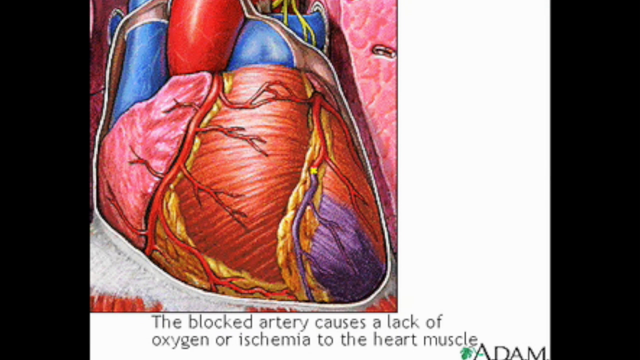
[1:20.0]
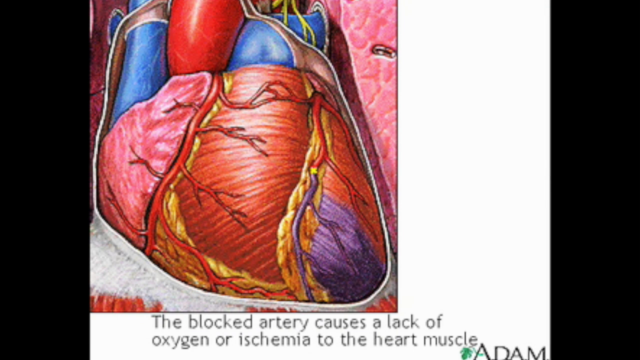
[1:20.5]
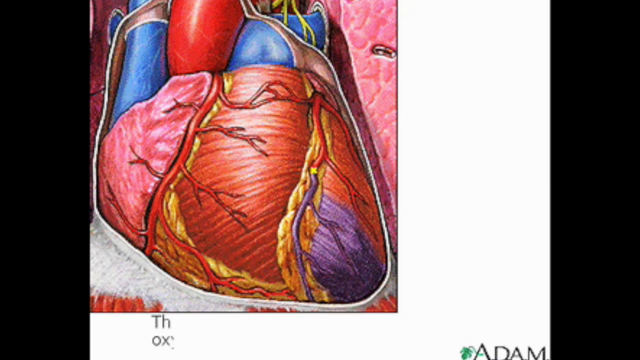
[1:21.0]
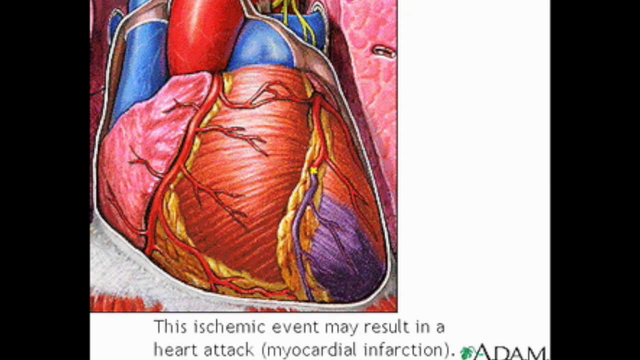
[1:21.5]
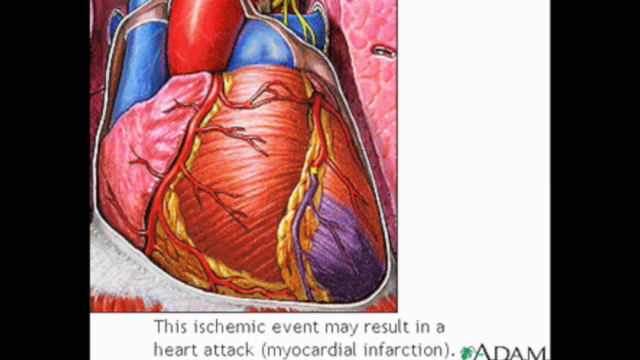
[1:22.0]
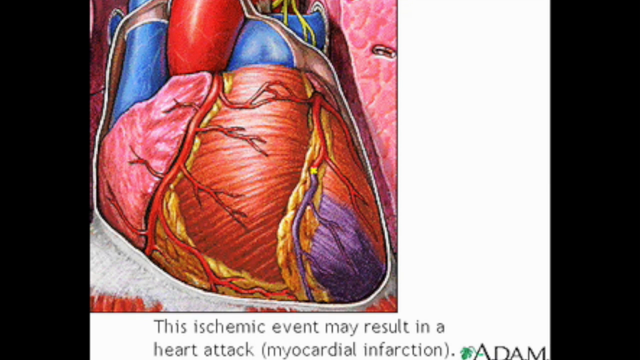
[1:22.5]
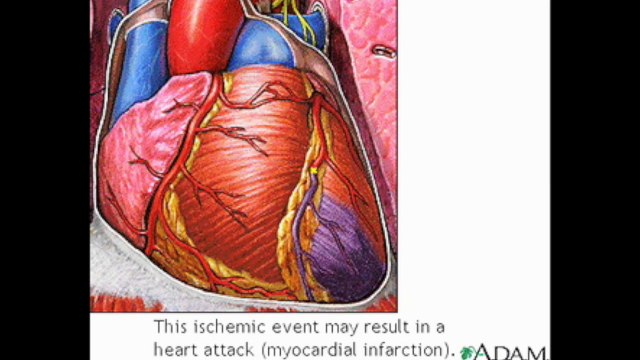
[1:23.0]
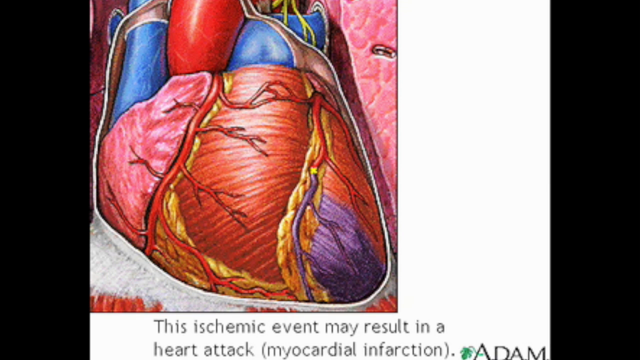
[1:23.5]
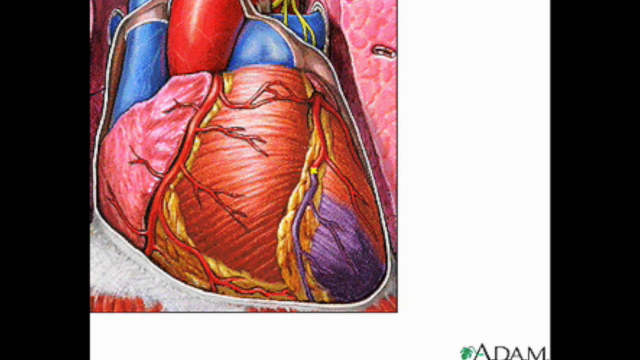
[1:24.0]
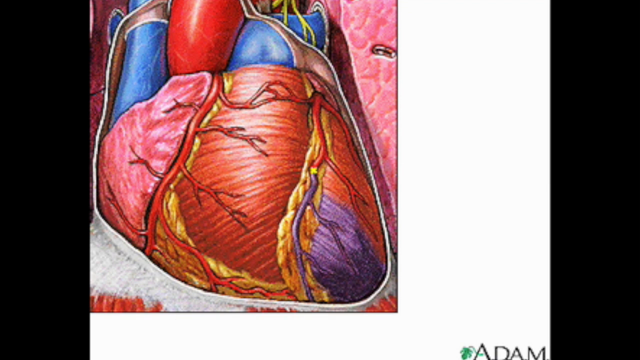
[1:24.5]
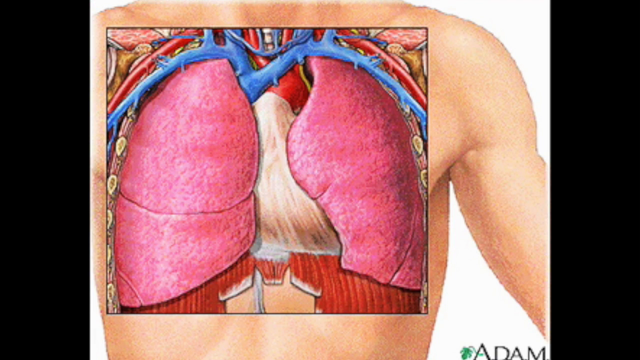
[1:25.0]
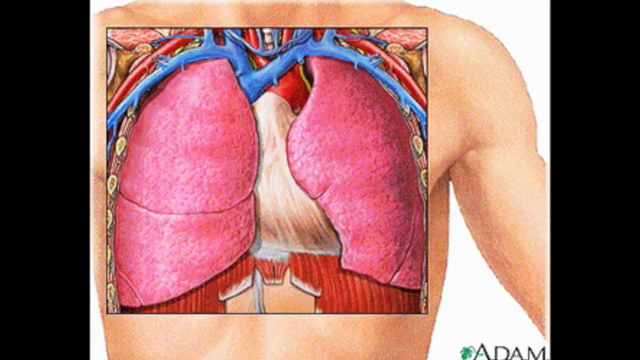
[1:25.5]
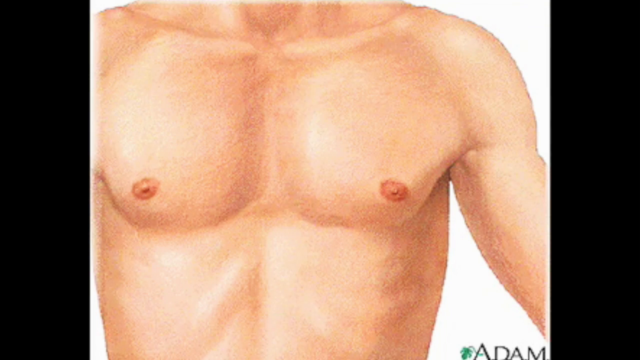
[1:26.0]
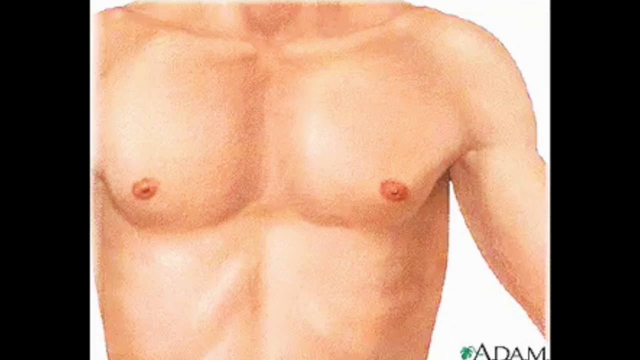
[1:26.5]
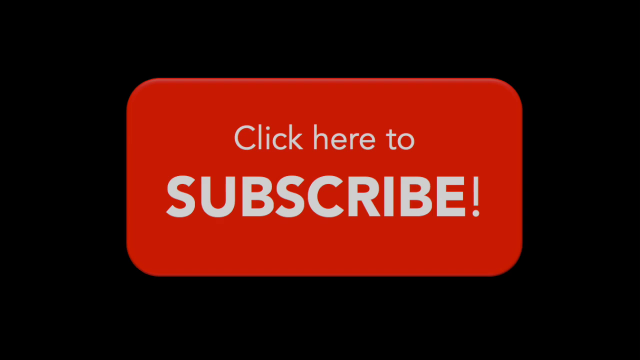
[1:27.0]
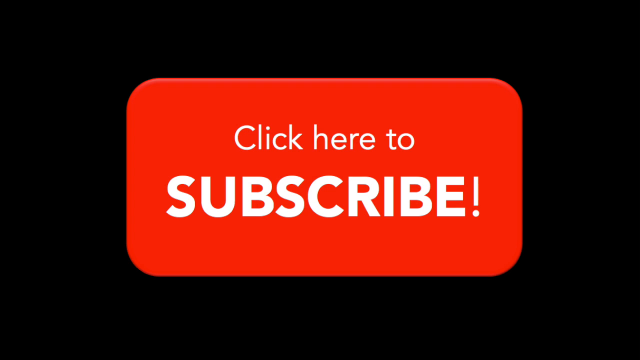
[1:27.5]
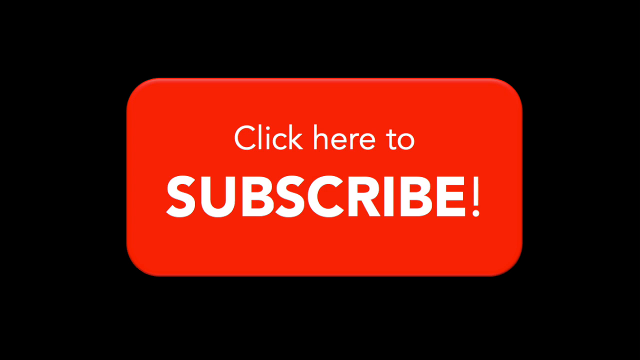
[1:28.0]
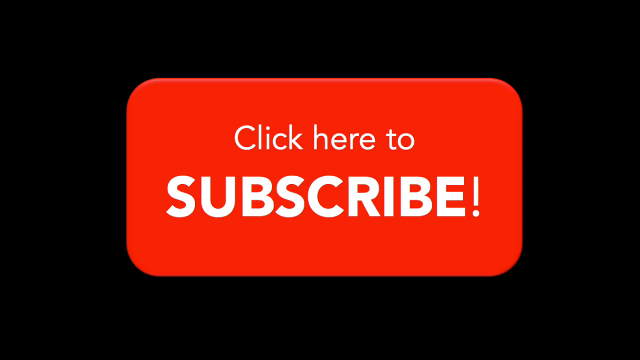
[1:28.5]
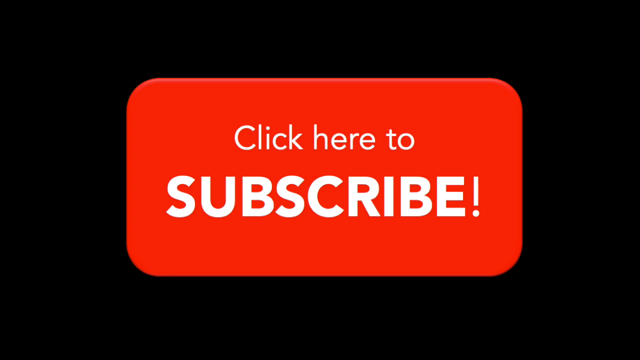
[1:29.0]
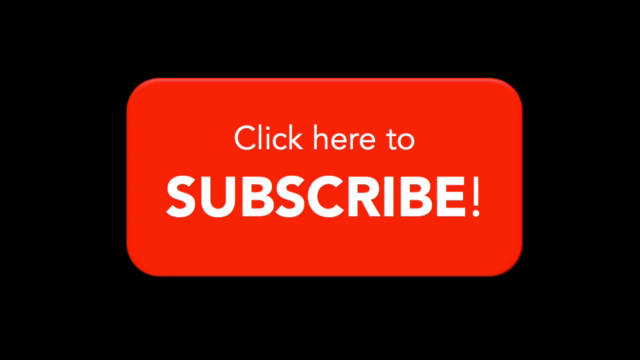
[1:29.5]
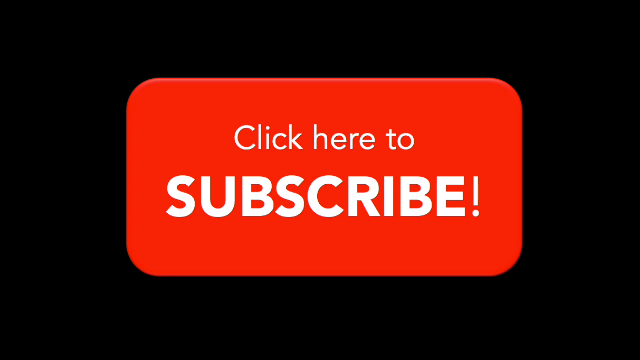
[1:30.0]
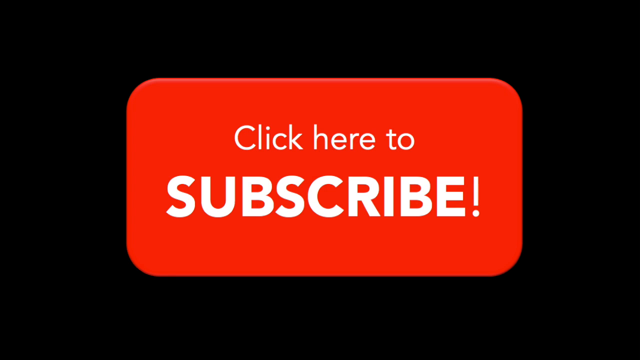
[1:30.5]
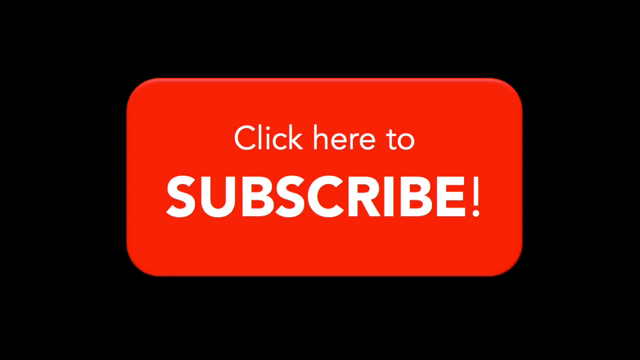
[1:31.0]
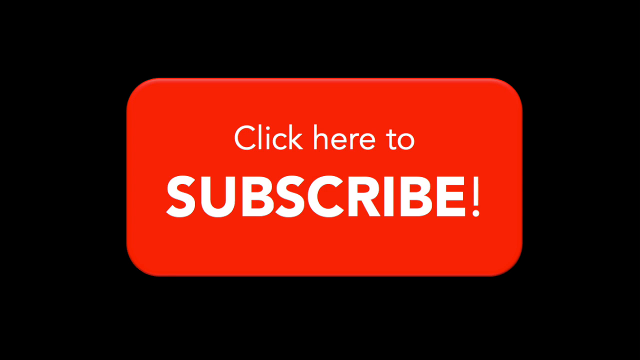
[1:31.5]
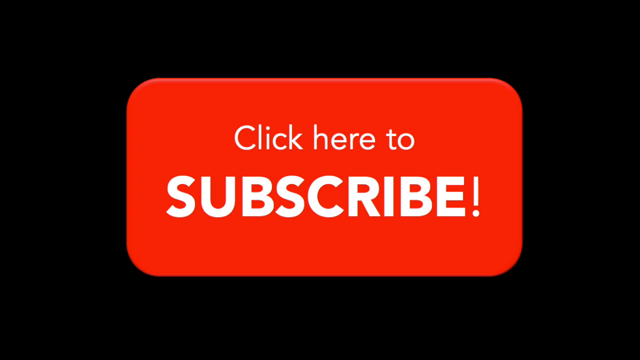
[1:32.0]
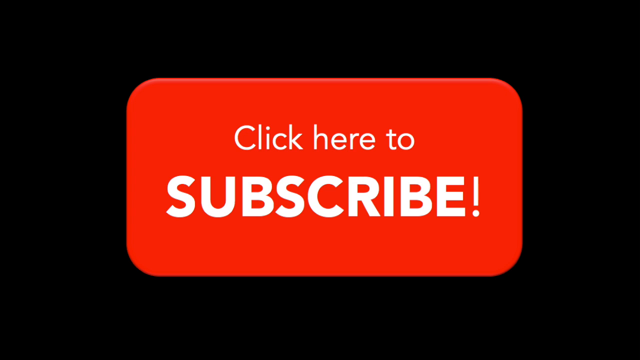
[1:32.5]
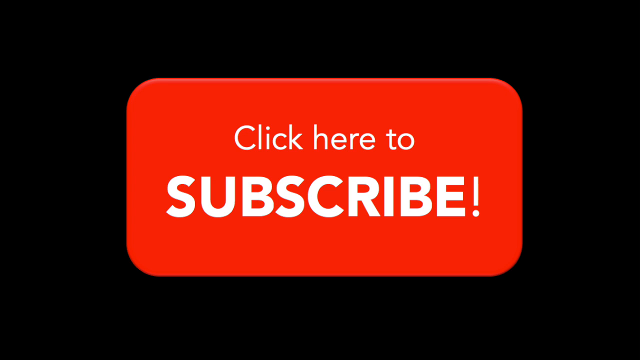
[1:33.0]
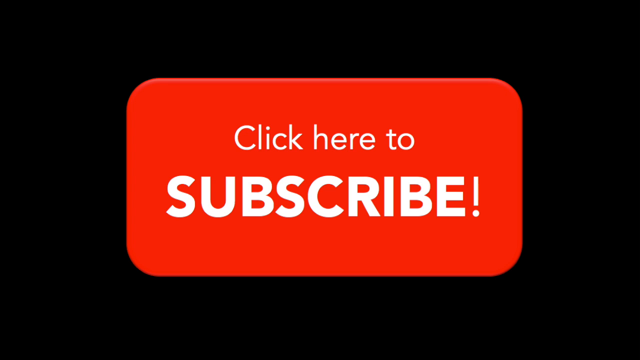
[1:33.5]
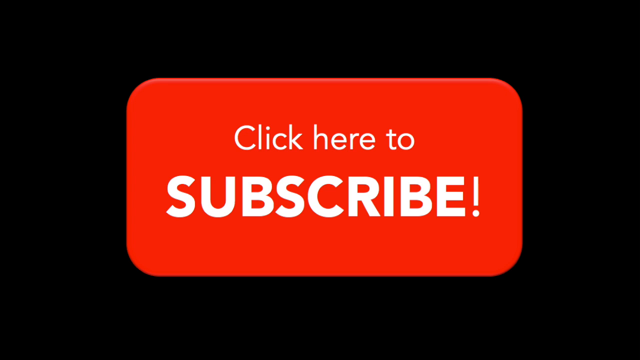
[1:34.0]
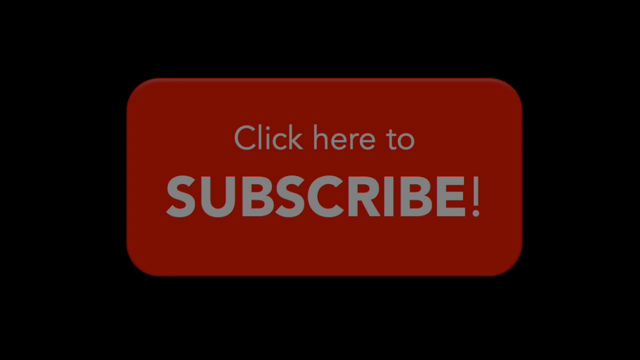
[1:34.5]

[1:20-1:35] The blocked artery is shown, and text then states that a blocked artery denying oxygen to the heart can be the cause of a heart attack, a myocardial infarction. The video has zoomed back out to the heart, where the blocked artery is identified only as a white dot on the whole heart. It then scrolls back out from the heart, lungs, arteries and veins to the full picture of all the organs, and then back to the torso that was originally overlaid, on its white background with the word "Adam" in the lower right-hand corner. Finally it moves to a red subscribe button reading "Click here to subscribe" in white lettering, against a black background.